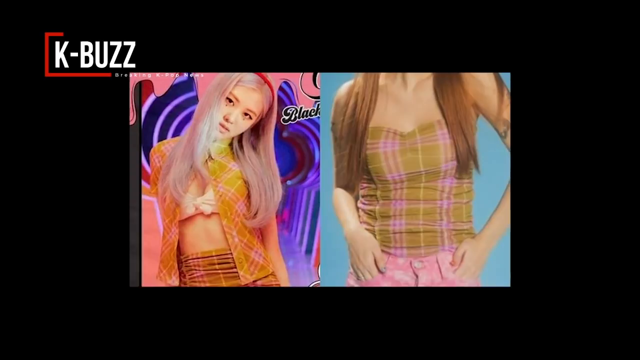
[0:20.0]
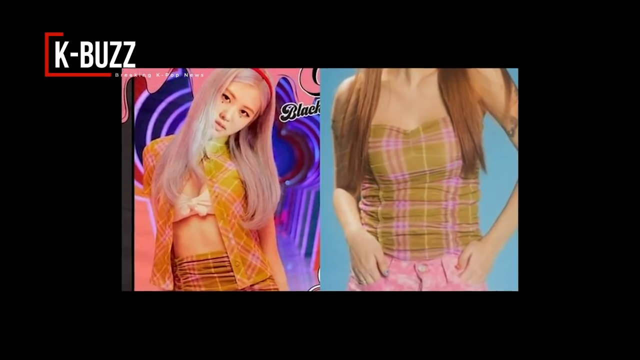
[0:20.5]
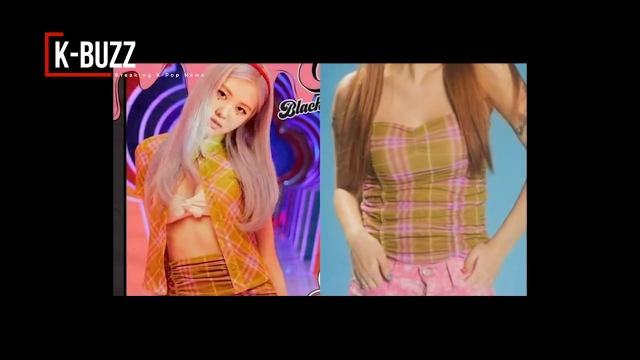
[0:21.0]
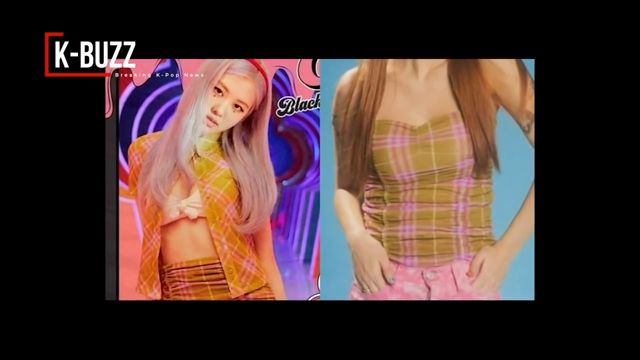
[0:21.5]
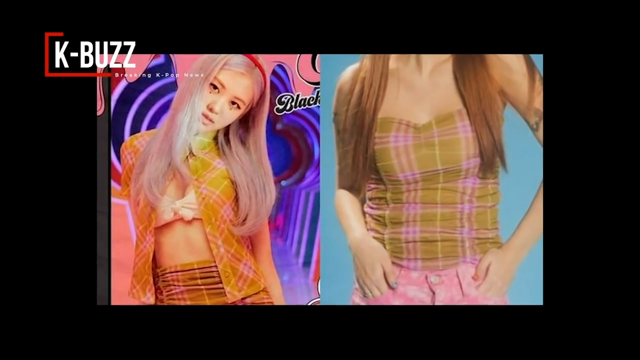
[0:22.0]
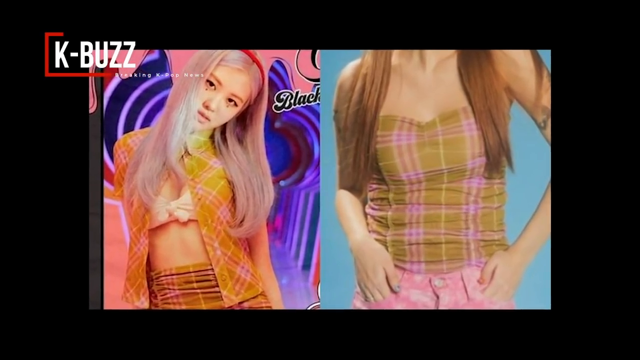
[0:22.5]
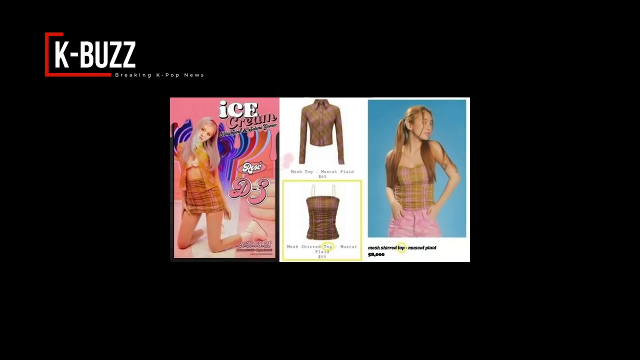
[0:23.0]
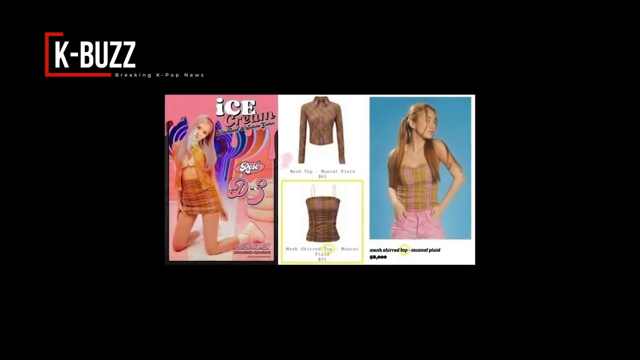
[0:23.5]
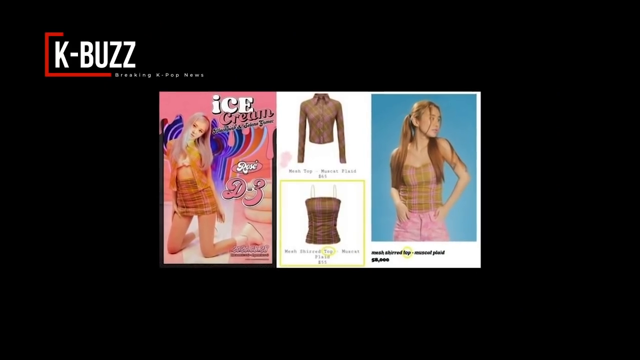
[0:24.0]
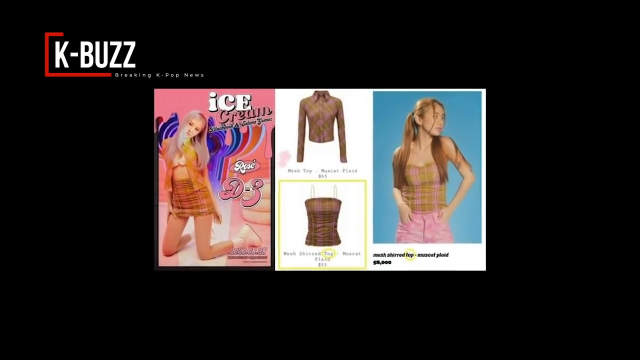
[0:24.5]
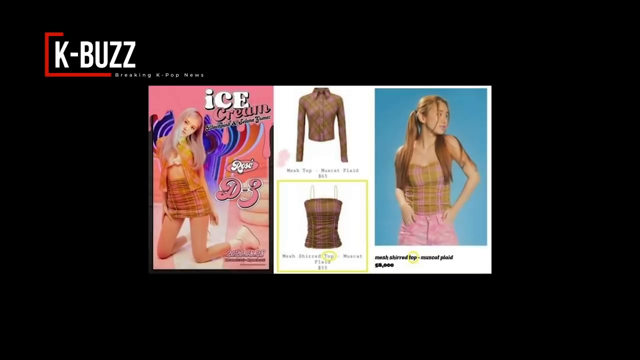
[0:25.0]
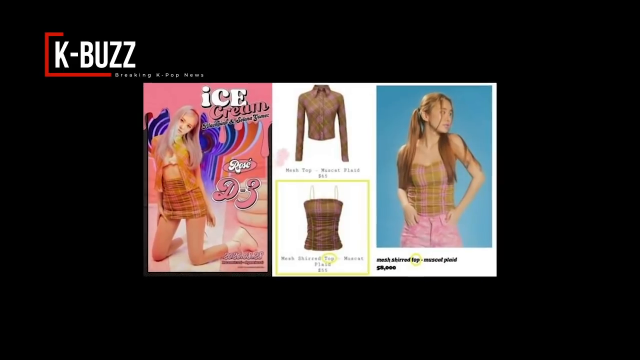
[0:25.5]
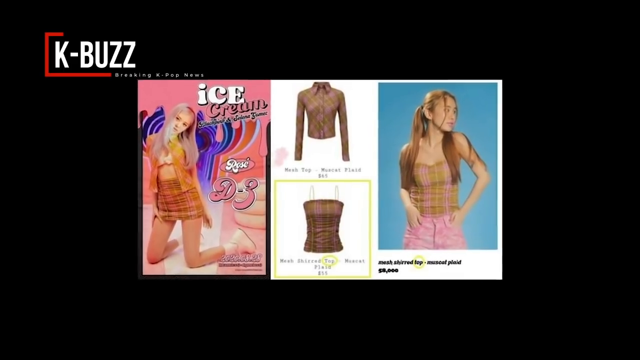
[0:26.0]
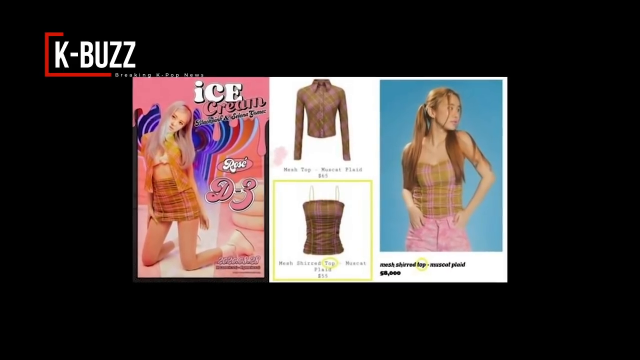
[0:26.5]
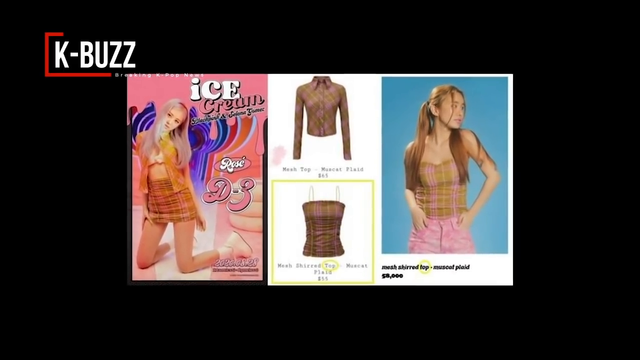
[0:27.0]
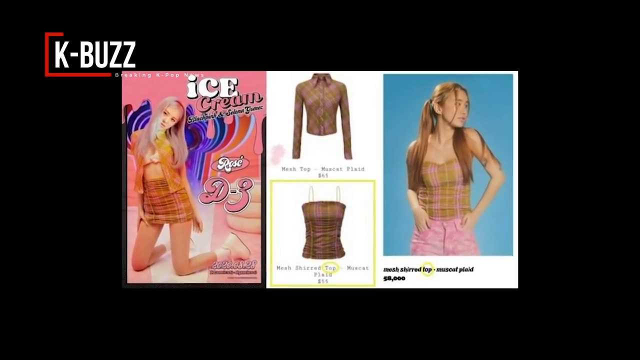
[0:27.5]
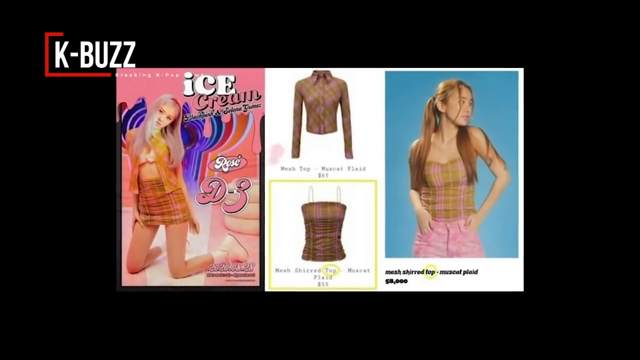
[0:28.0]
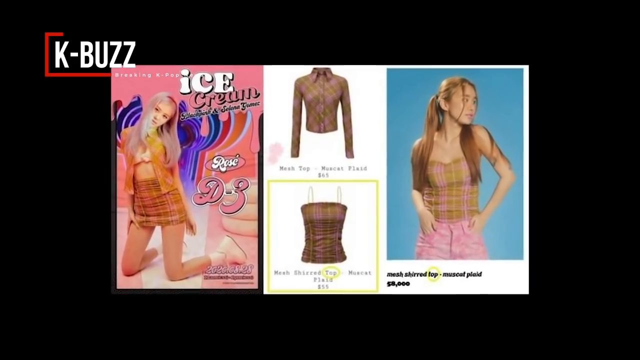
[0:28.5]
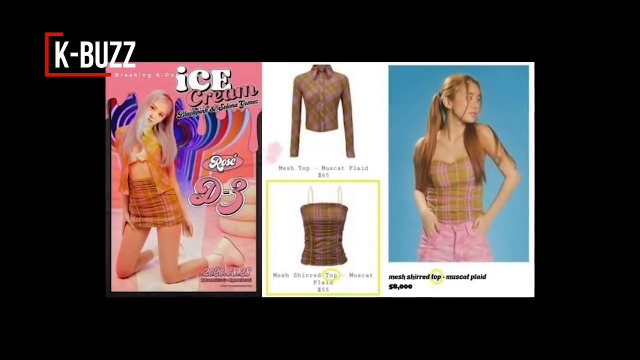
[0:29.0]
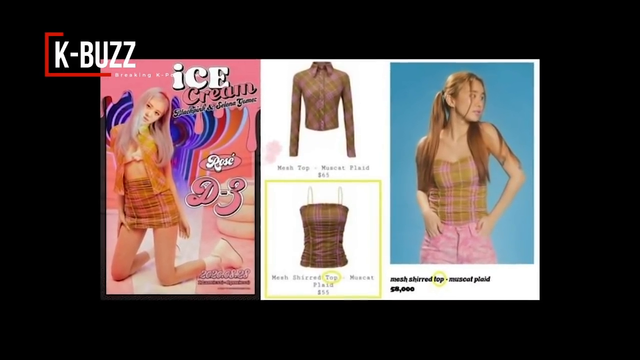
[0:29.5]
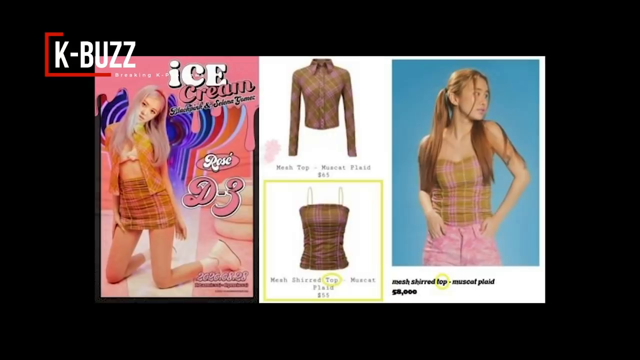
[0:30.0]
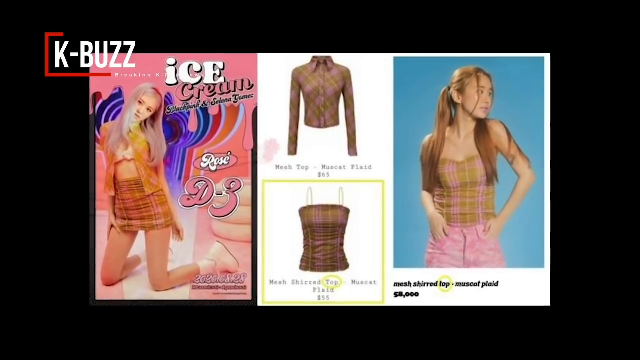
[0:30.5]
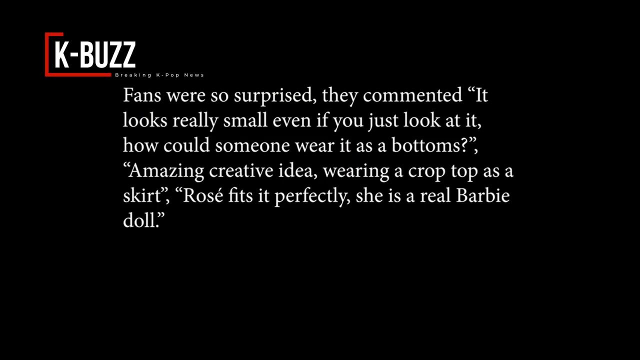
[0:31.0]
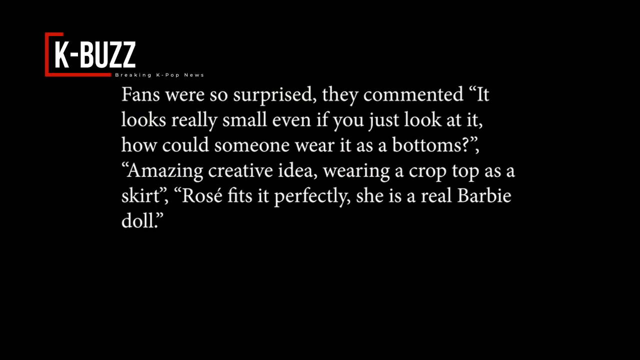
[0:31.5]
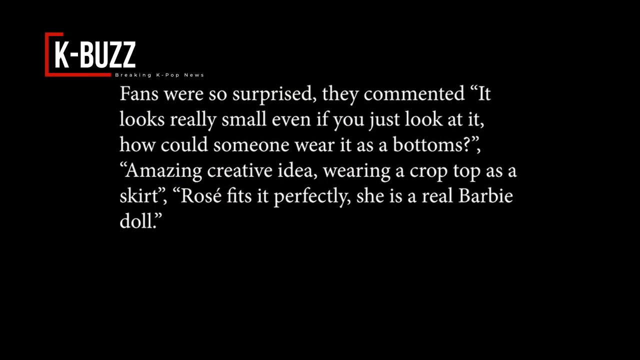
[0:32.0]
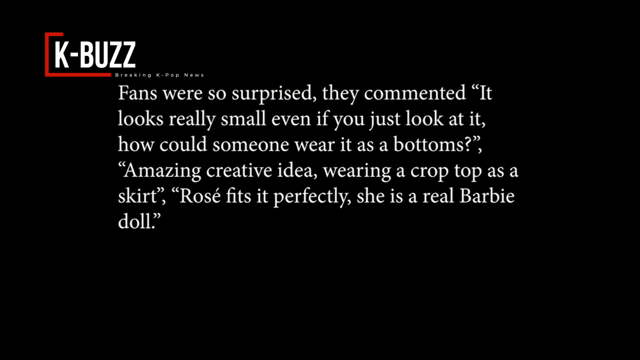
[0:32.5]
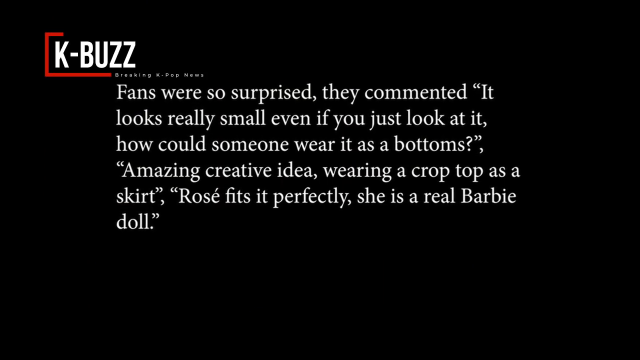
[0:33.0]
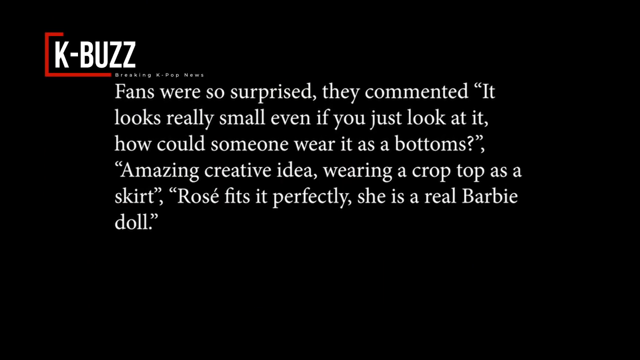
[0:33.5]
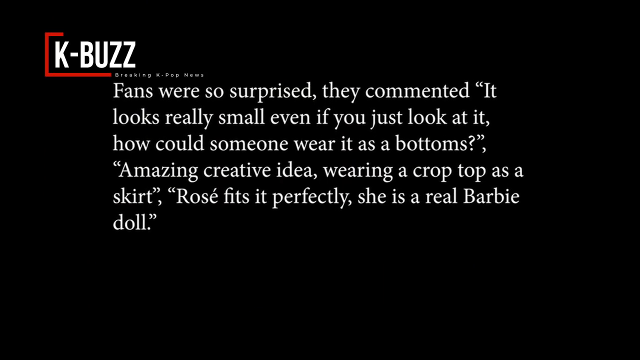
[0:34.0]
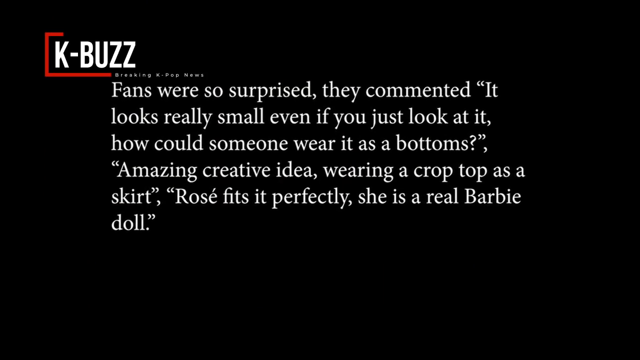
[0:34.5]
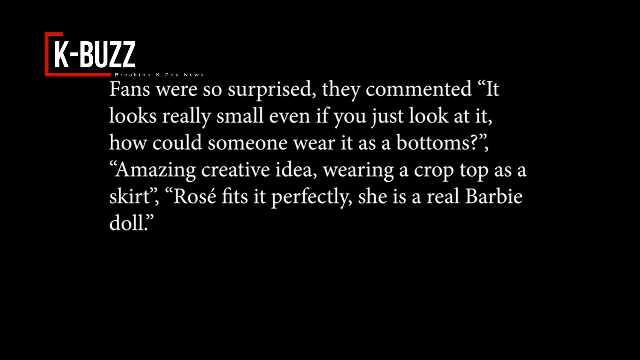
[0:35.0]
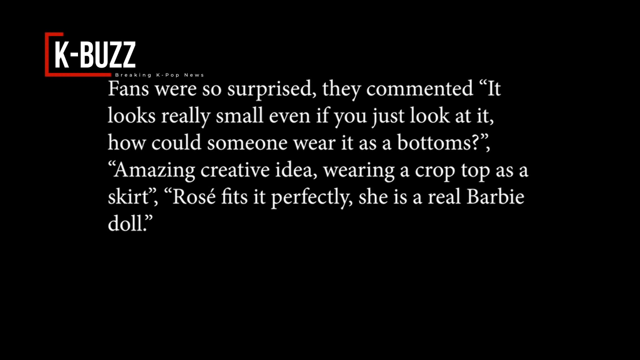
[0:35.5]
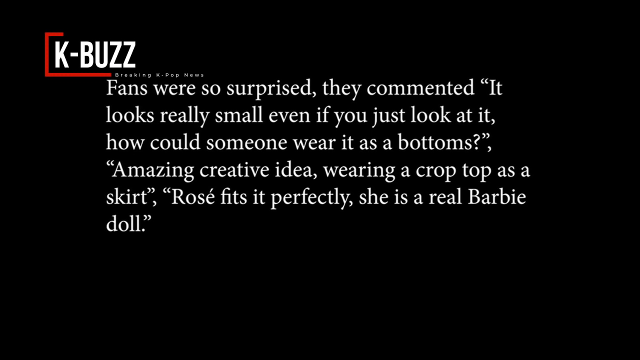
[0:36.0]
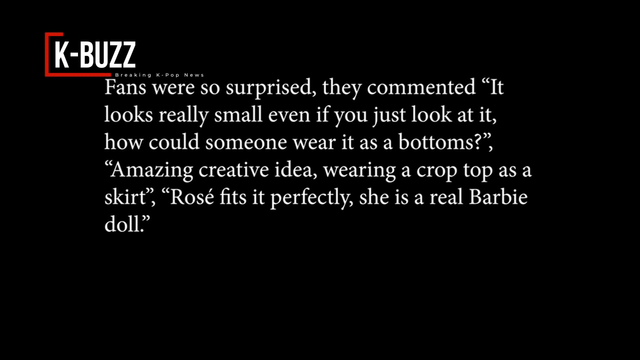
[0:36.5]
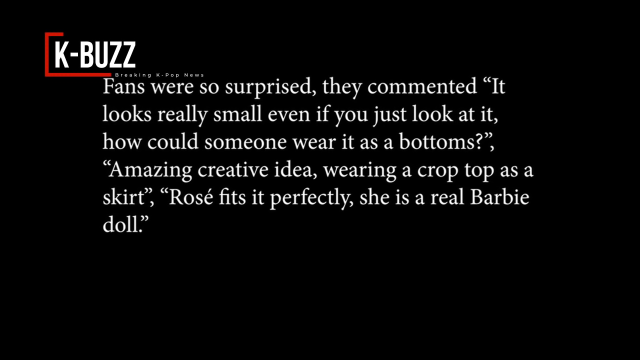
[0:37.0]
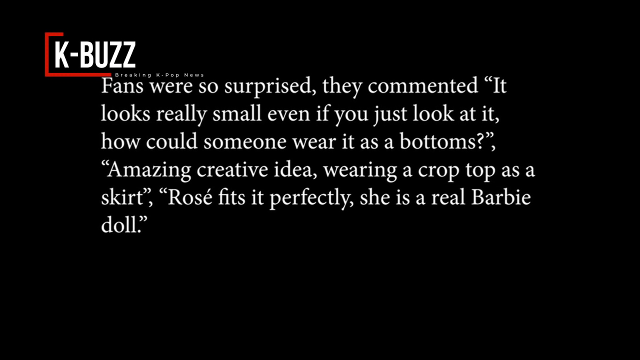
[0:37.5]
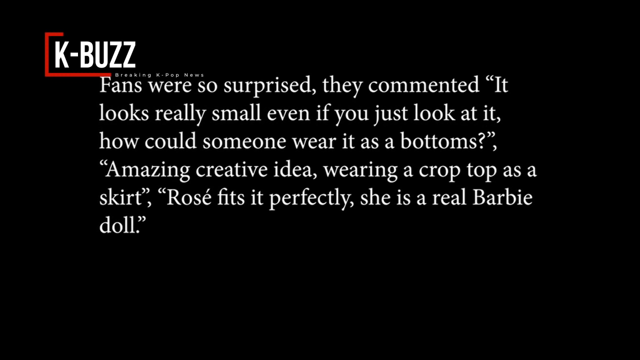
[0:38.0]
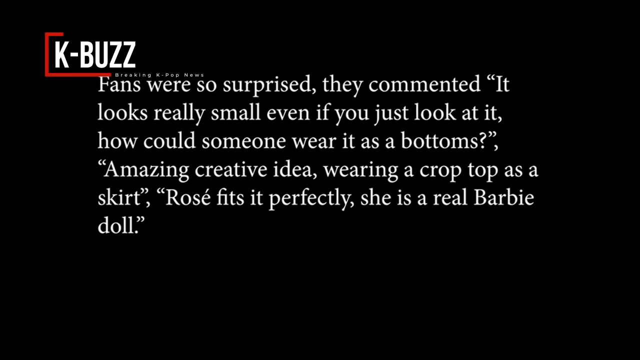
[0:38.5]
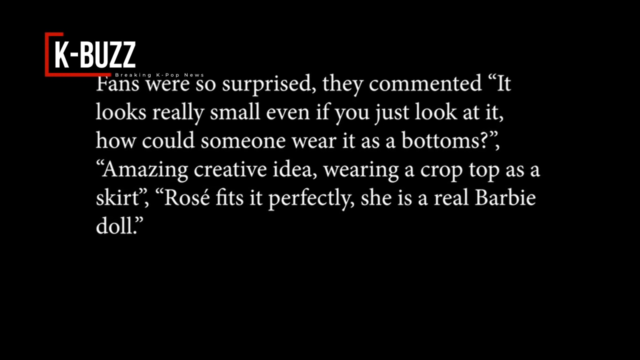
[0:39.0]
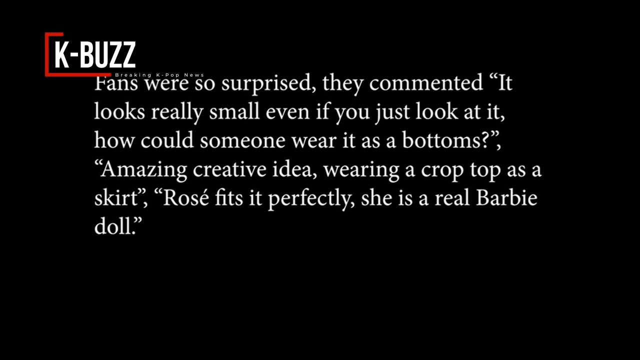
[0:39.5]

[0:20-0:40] A model on the right-hand side shows the top of the outfit, and the woman appears to be wearing a top as a bottom. In the bottom right, where the red rectangle is, the text reads "breaking k-pop news". In the center, text includes "we're so surprised", "it really looks small even if you just look at it how could someone wear it as", "amazing creative idea wearing a crop top as a" and "fits it perfectly she's a real barbie". The video does a slow zoom in on the text against a black background.